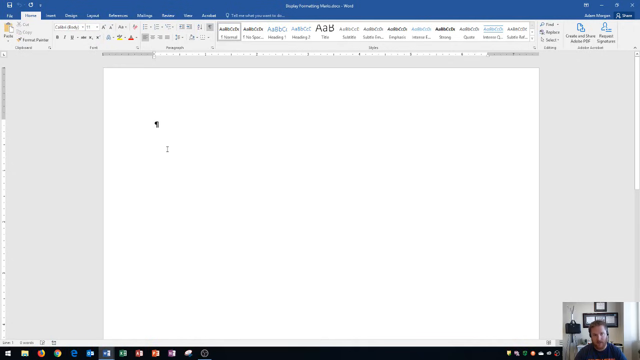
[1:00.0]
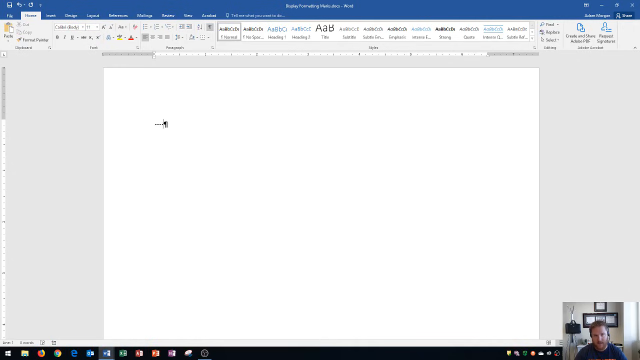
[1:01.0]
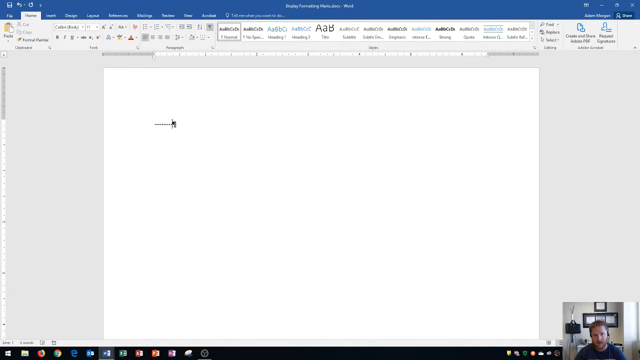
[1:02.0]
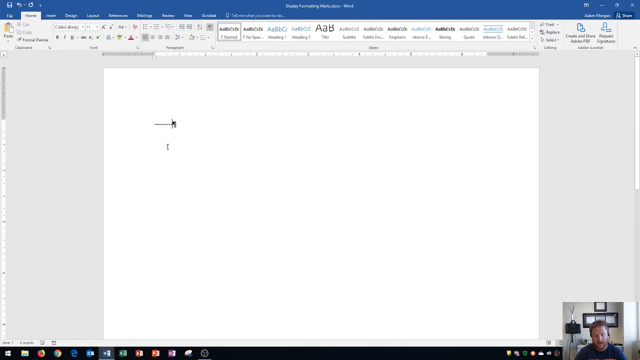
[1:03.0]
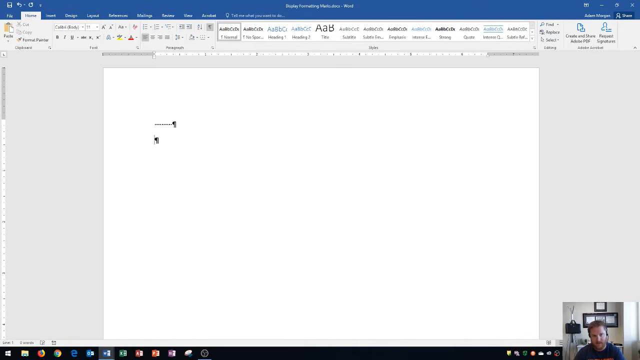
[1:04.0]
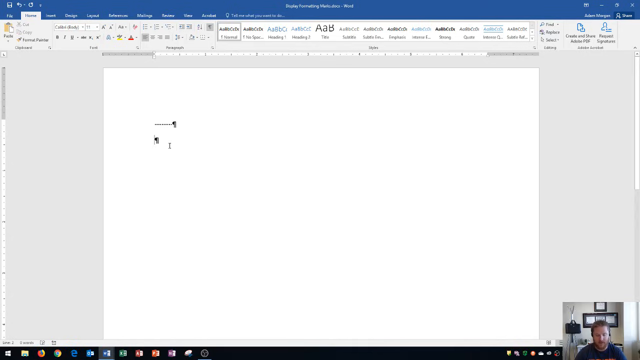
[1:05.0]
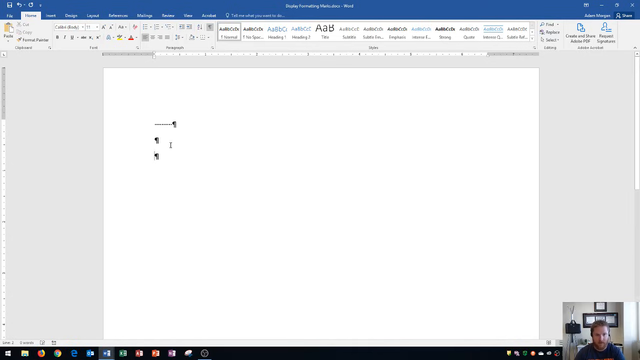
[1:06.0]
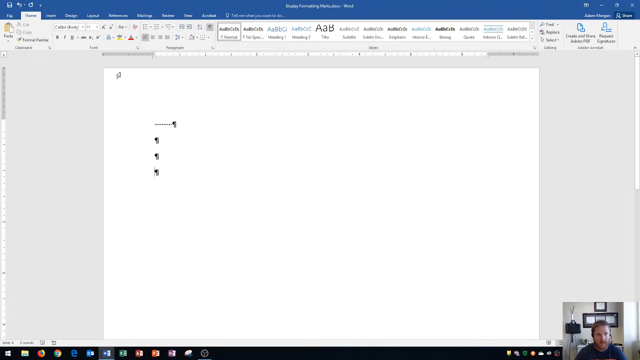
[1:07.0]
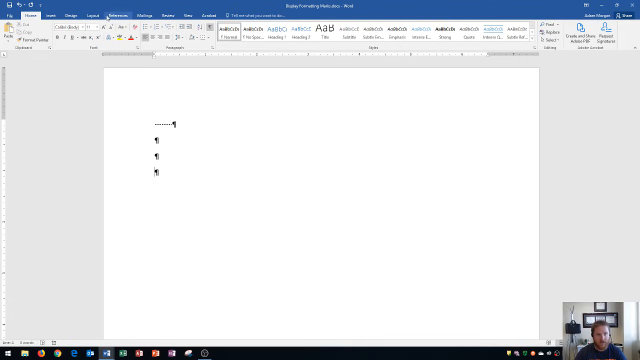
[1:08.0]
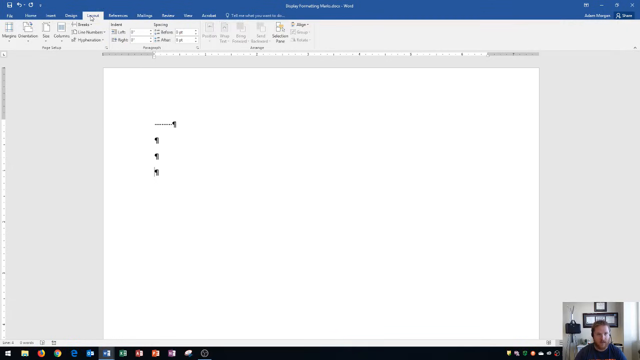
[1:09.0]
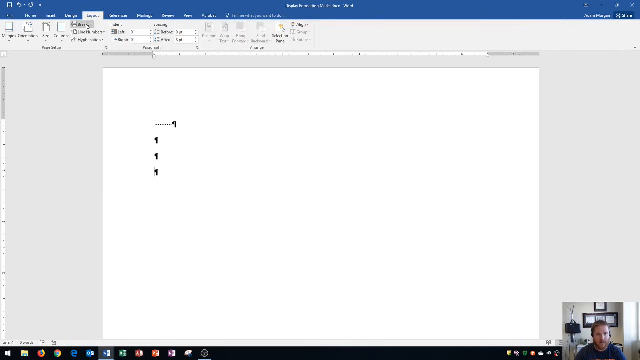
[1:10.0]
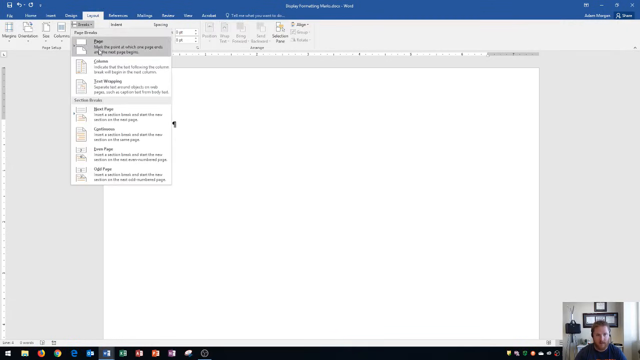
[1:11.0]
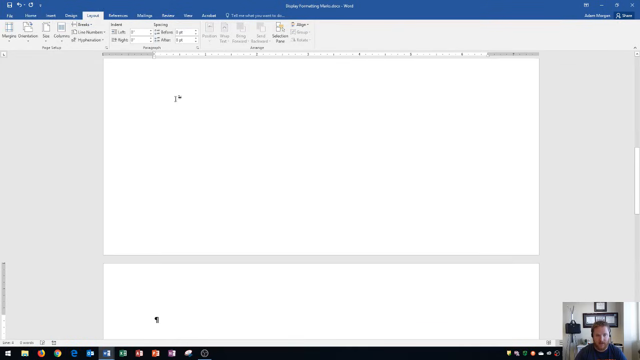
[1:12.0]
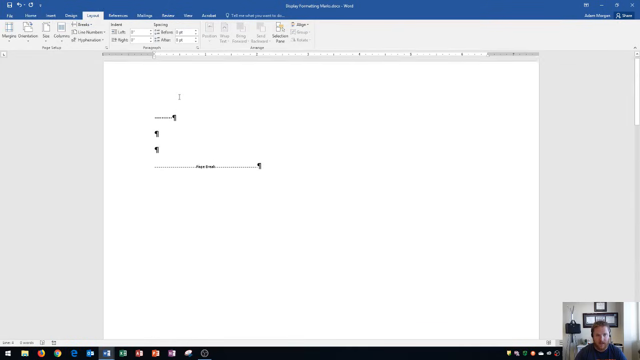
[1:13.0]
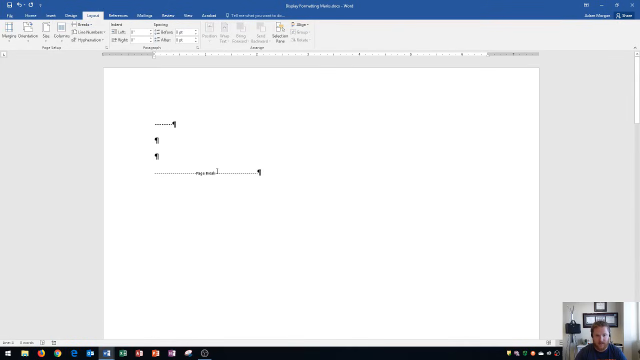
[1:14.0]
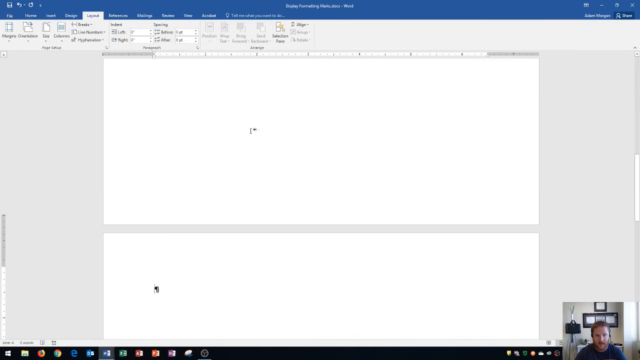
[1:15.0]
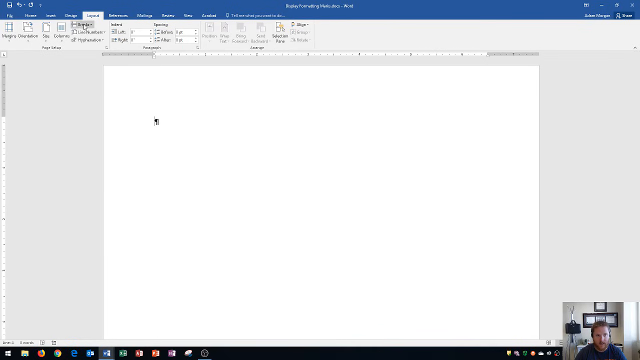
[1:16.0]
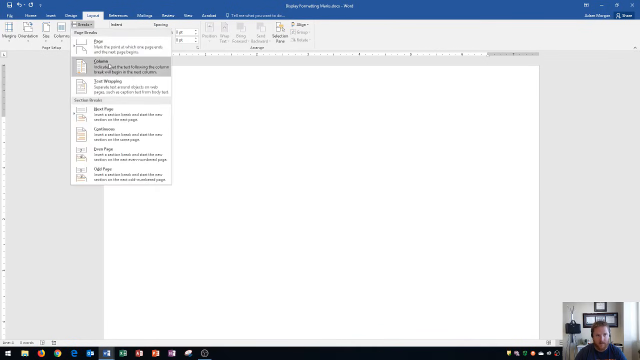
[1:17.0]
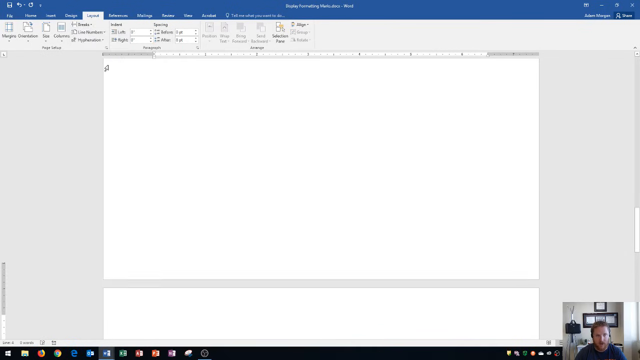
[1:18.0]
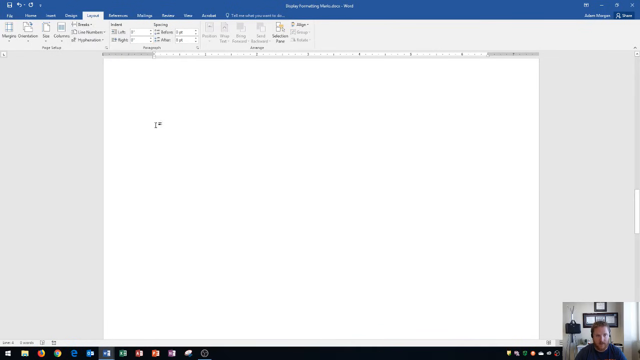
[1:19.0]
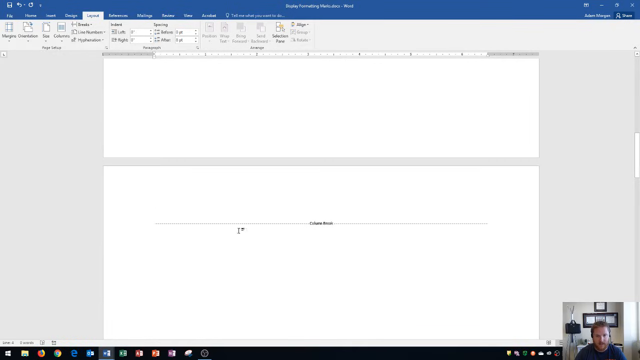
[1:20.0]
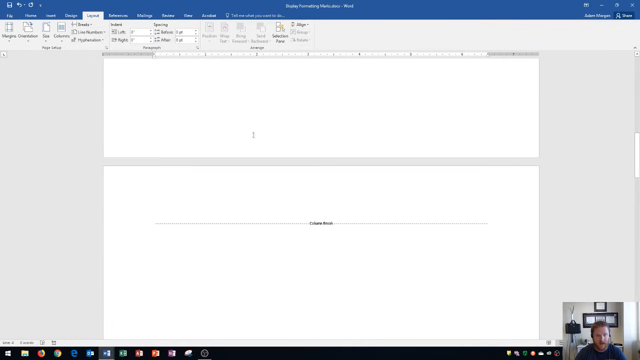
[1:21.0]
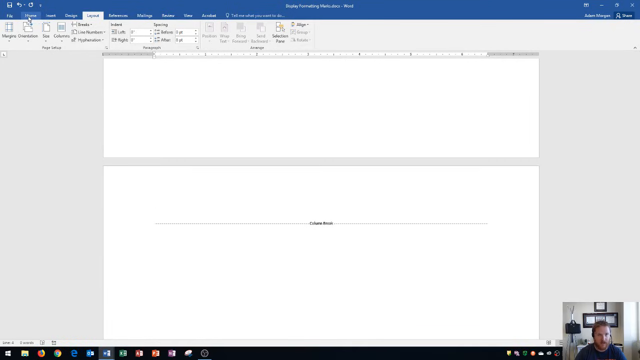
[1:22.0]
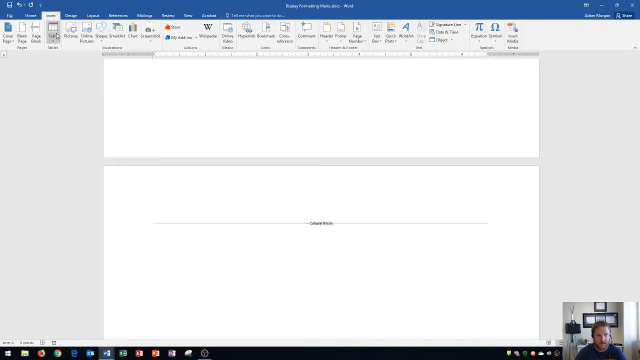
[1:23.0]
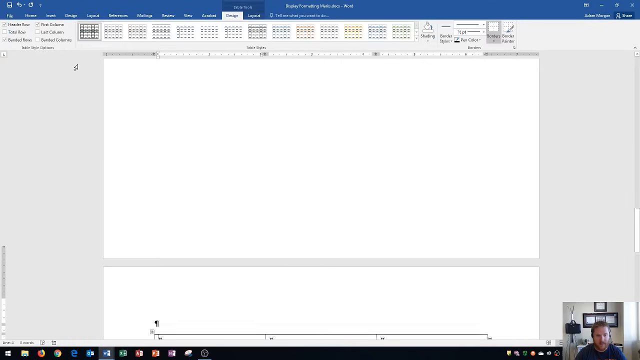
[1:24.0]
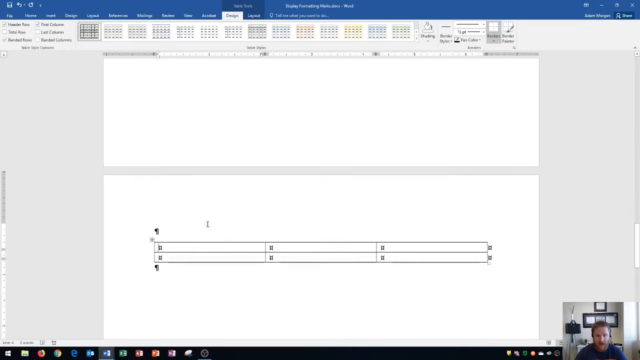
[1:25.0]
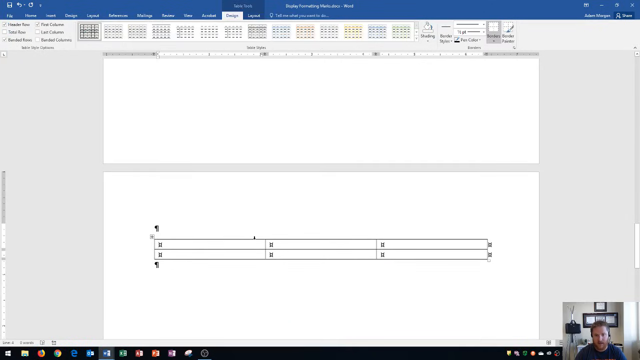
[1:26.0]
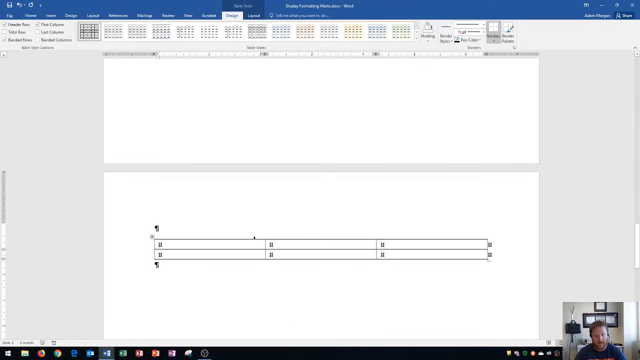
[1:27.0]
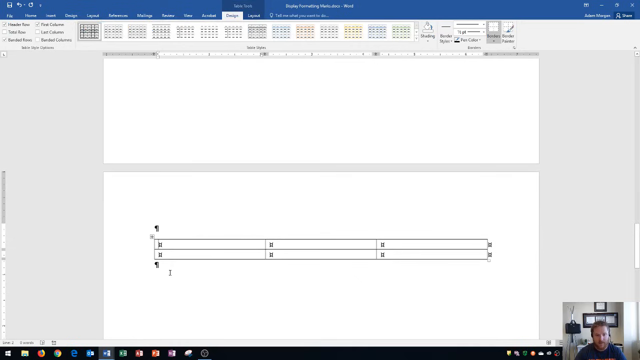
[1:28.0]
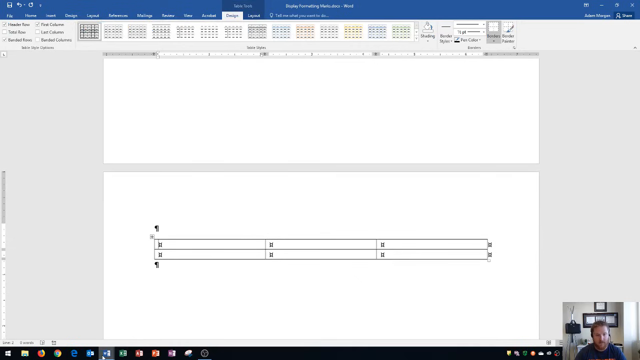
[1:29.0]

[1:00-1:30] Typing is done on the screen. A mark that looks like a paragraph marker appears, then some lettering too small to read is typed, pushing the marker to the right. The mouse moves down a bit and makes another paragraph marker, then a second and a third, for four in total. The mouse goes up to the menu and clicks a button, and "Page Break" appears at the bottom next to the other marker. The page is scrolled down to a new page. The mouse goes up to the menu again and highlights the second item, which looks like it says "Column". The view scrolls up and the mouse circles over something that looks like it says "Column Break", then goes back to the menu and clicks the Table button. Scrolling down shows a table with six sections: three rectangles on top and three directly below. The mouse then goes down to the toolbar. Throughout this, the man keeps speaking to the camera in the small video in the bottom right, mostly motionless apart from his mouth, swaying slightly left and right. He turns his head slightly to his left, then leans back a little as he continues to talk.